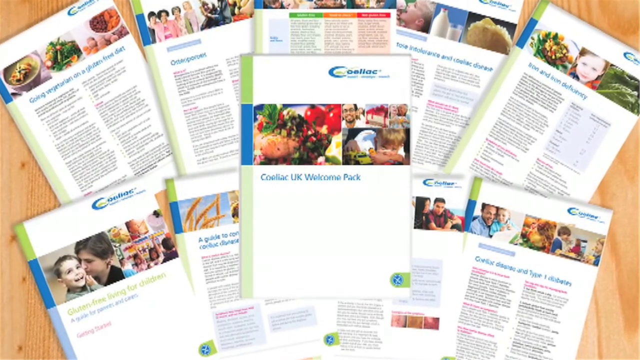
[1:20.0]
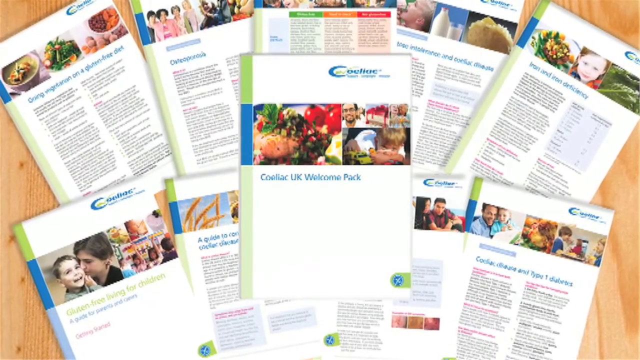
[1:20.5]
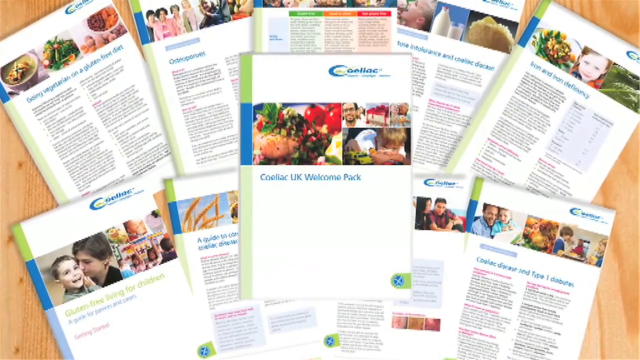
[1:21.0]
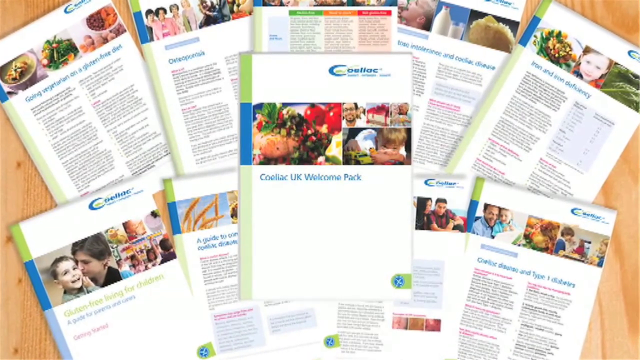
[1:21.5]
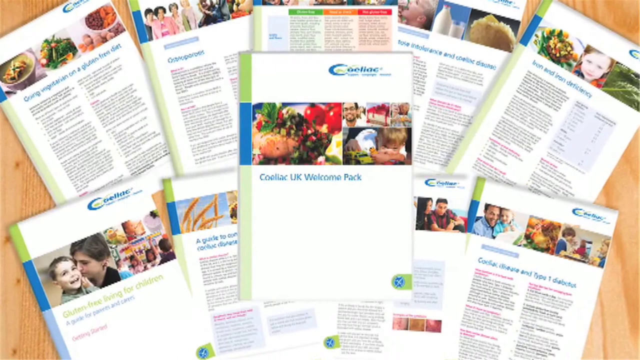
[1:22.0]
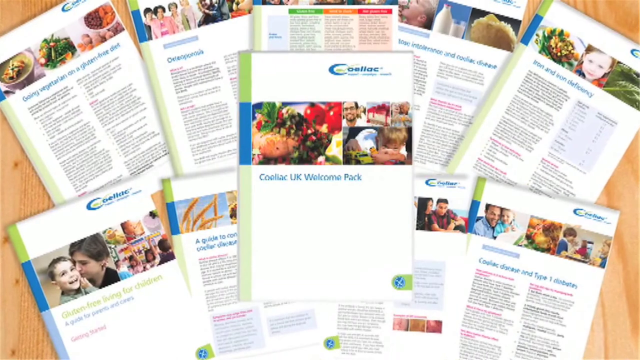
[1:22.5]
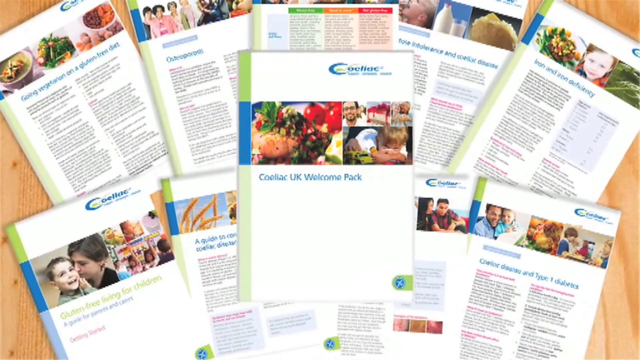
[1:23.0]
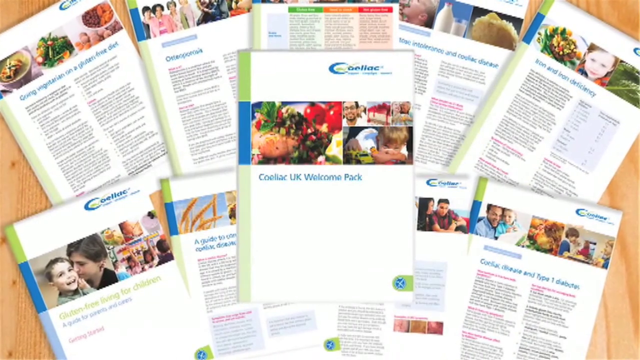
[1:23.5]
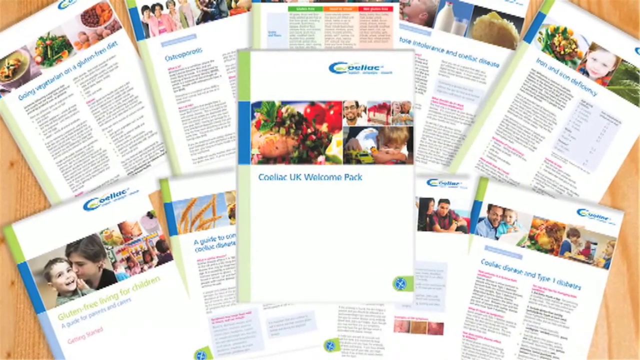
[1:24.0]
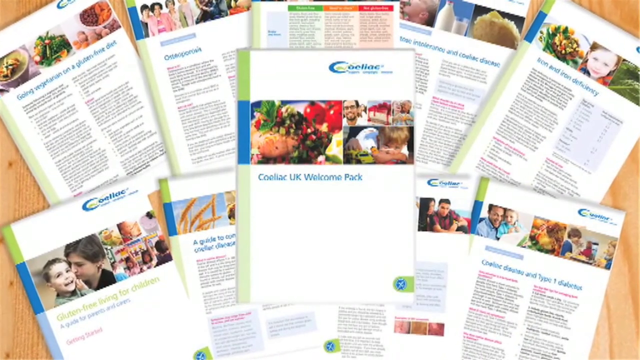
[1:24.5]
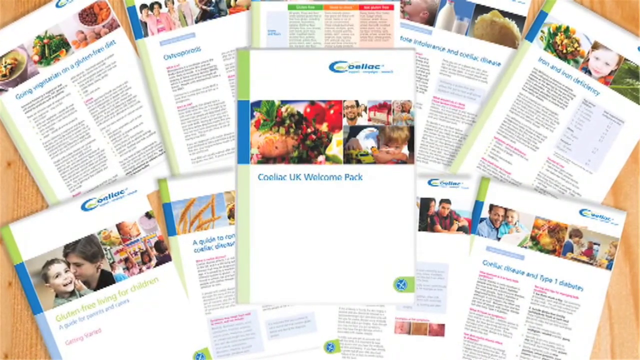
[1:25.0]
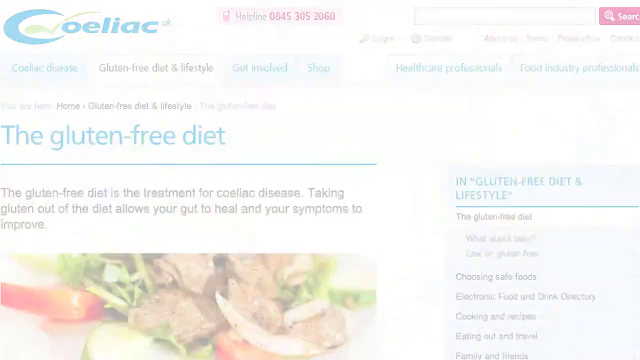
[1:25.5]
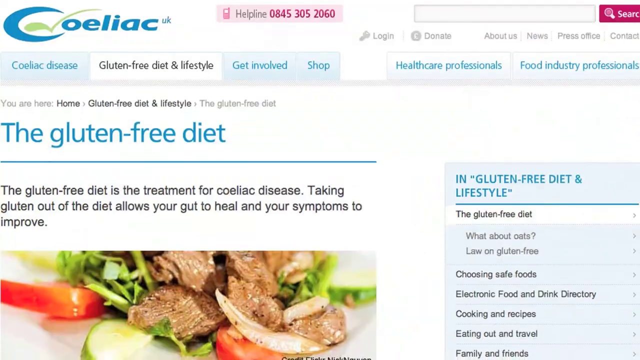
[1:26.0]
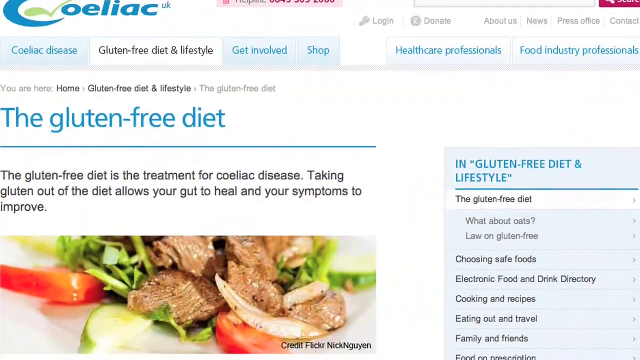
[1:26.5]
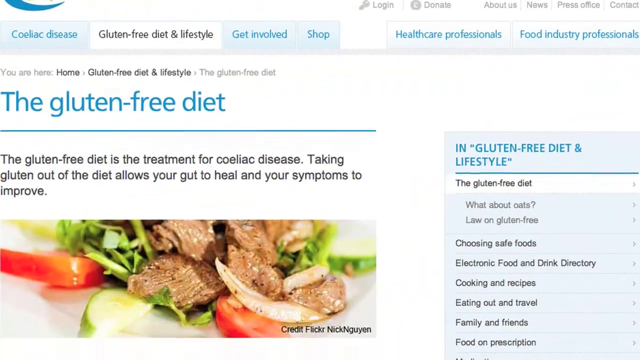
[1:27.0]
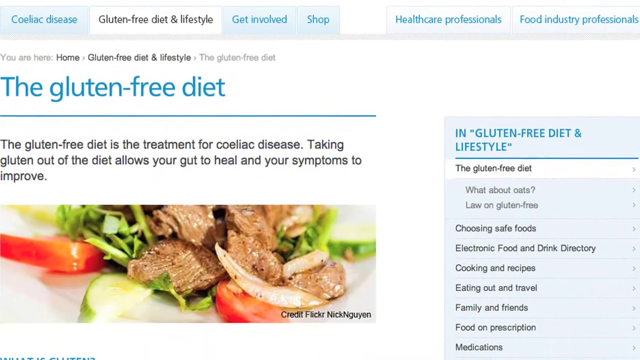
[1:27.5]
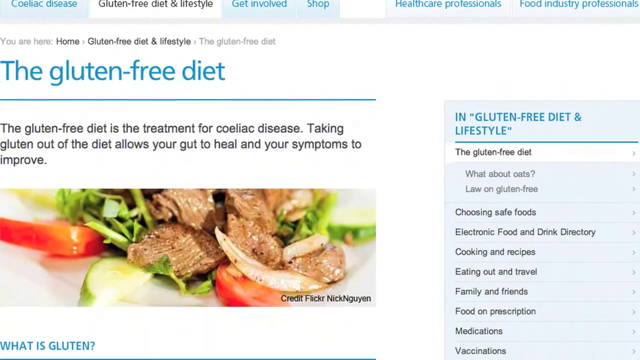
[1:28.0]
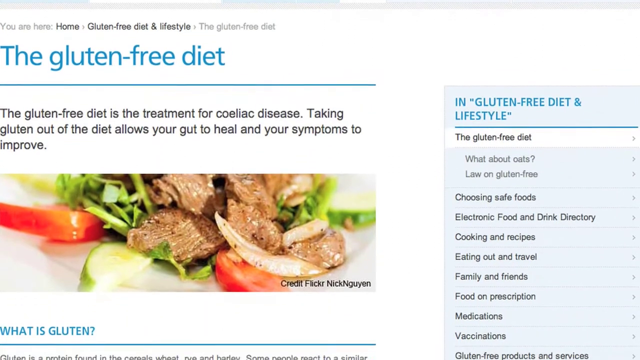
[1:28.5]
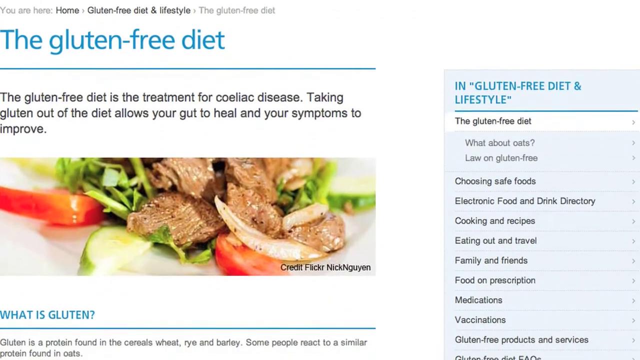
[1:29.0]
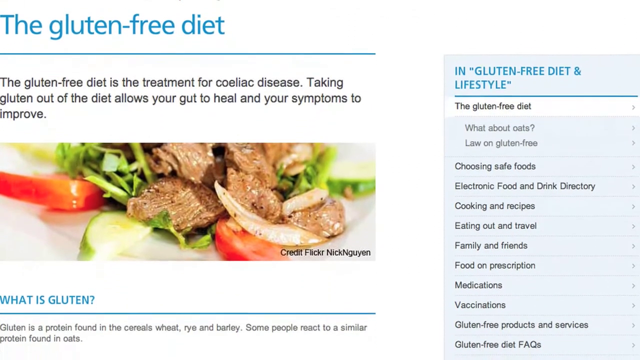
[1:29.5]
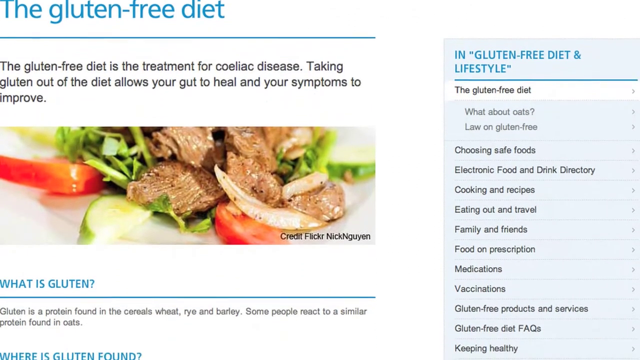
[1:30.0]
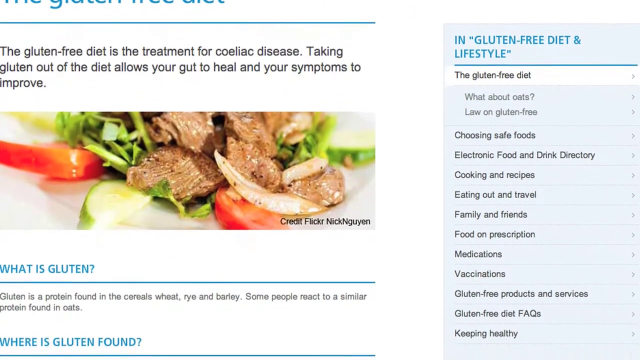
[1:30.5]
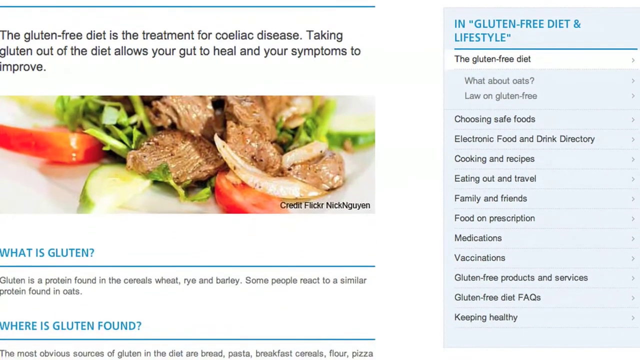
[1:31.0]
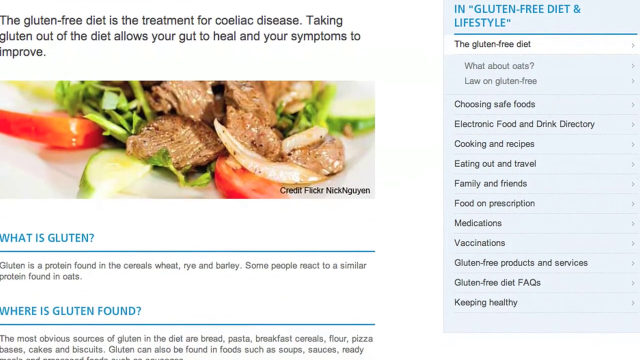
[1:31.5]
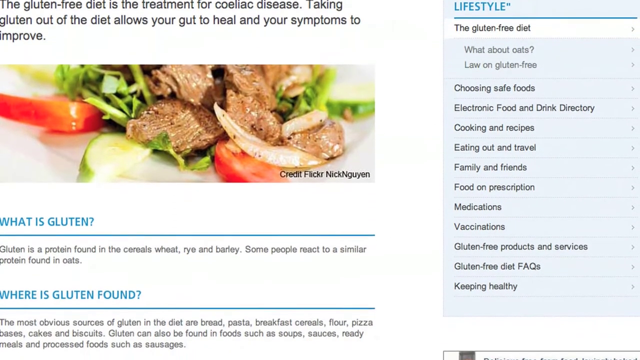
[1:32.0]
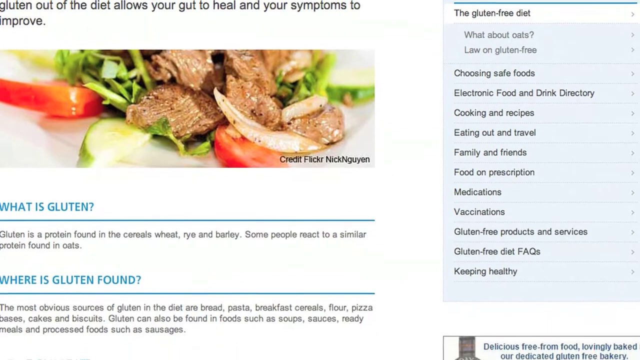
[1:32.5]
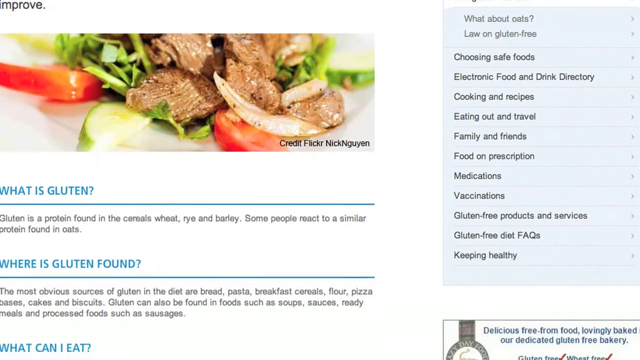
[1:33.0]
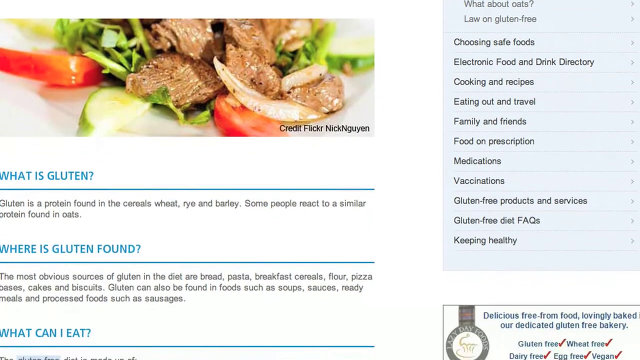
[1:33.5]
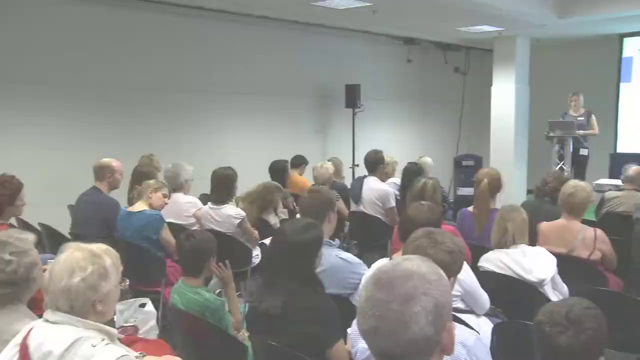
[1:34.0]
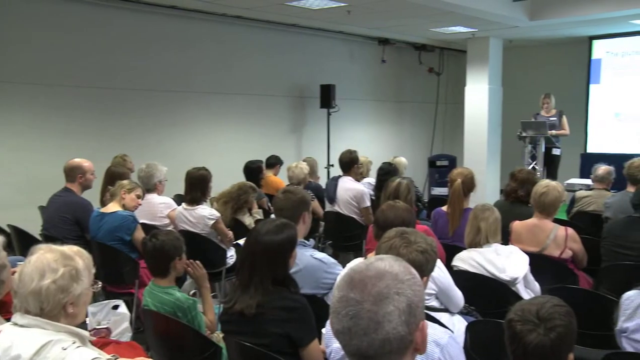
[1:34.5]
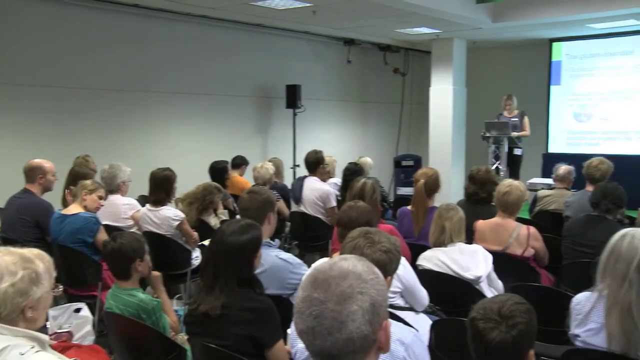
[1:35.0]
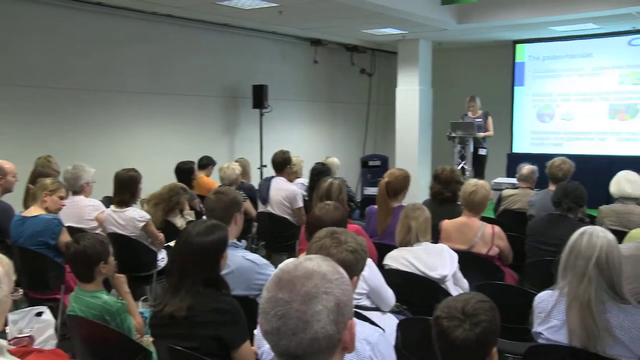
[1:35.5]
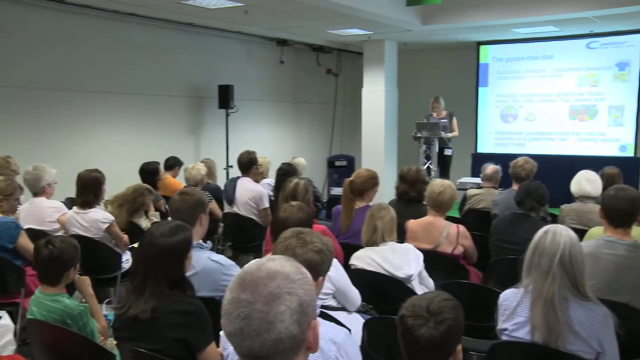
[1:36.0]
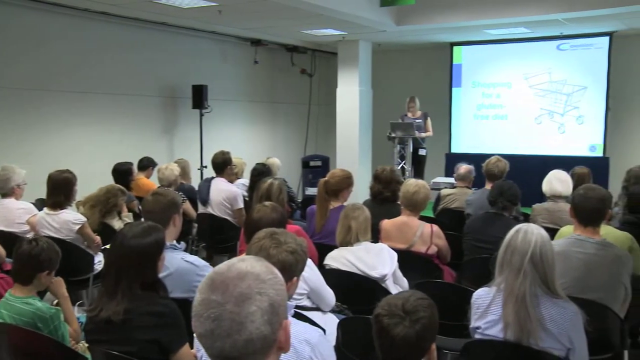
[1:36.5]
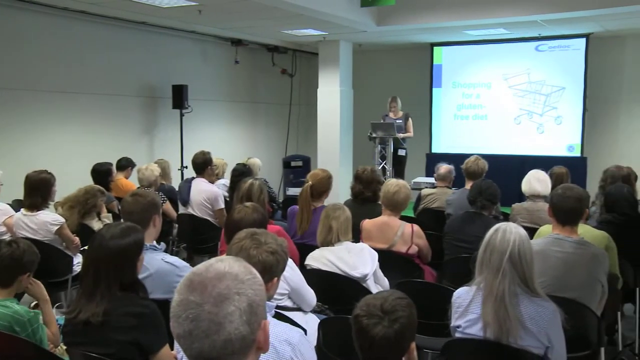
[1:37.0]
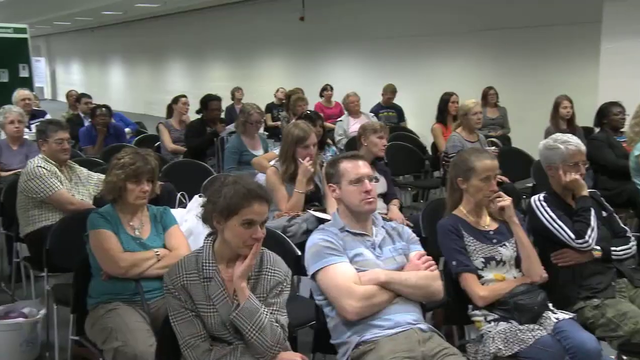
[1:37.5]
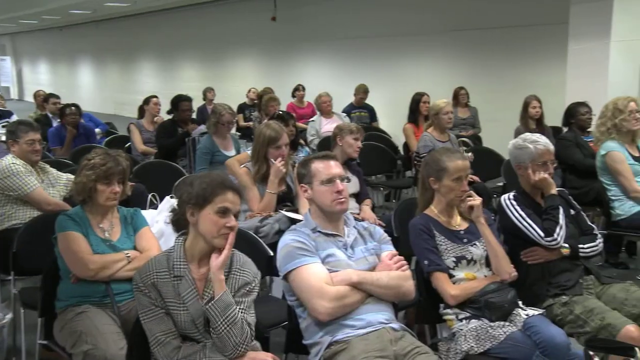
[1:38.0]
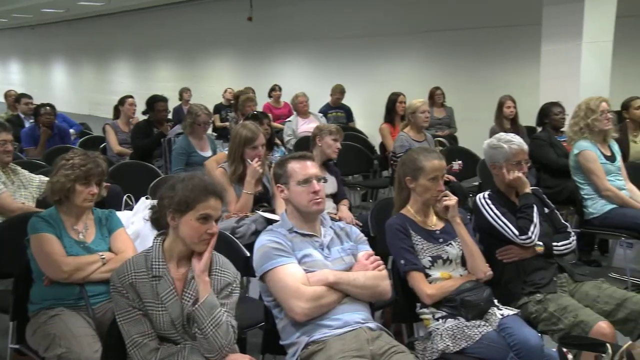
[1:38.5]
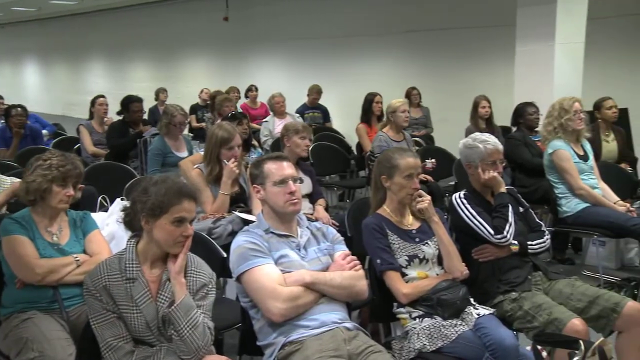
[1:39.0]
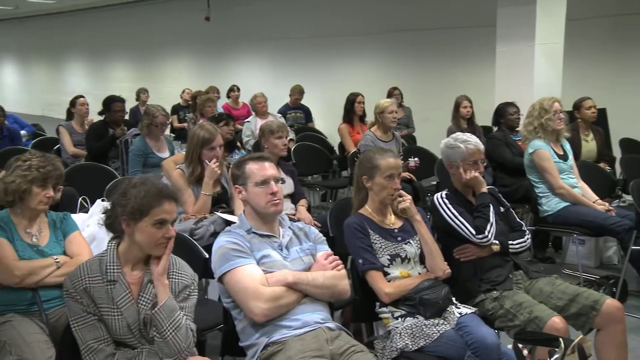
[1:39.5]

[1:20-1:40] What looks to be several pamphlets and information sheets about the disease are displayed, spread out on a table. Some of the writing can be made out: one says "Coeliac UK Welcome Pack," one says "Goin' Vegetarian," and one says something about iron deficiency; the writing on them is not fully readable. Next is what looks to be an online article on what appears to be the Coeliac webpage, headed "the Gluten Free Diet," with text underneath beginning "the Gluten Free Diet is the treatment for Coeliac disease." The page scrolls and seems to give an explanation of what gluten is and how to avoid it. The video then cuts to an image of somebody speaking in front of a group with a screen behind them.